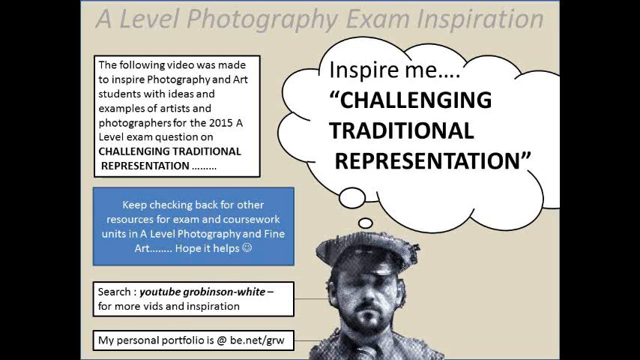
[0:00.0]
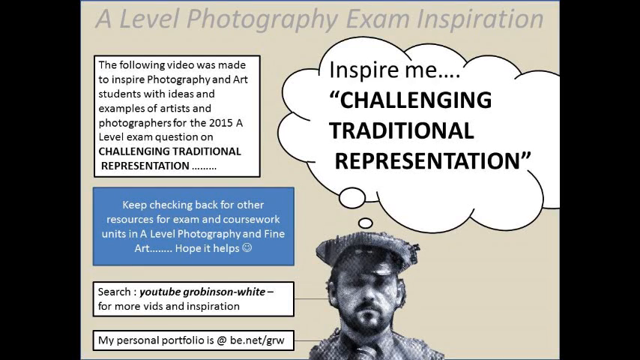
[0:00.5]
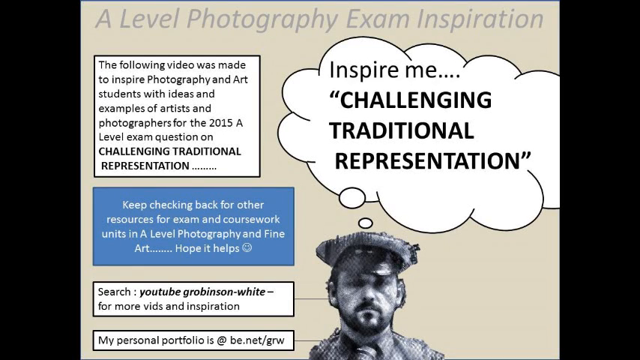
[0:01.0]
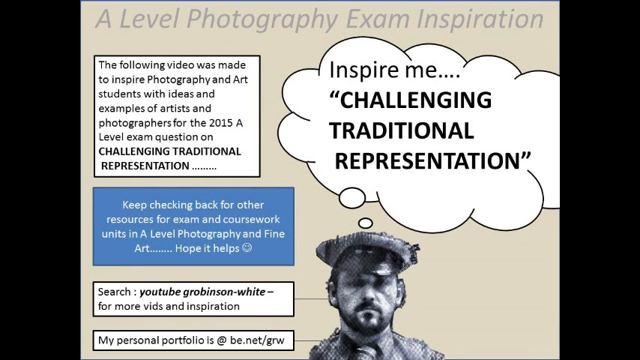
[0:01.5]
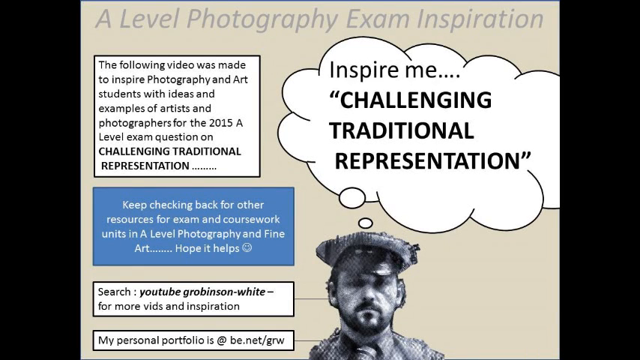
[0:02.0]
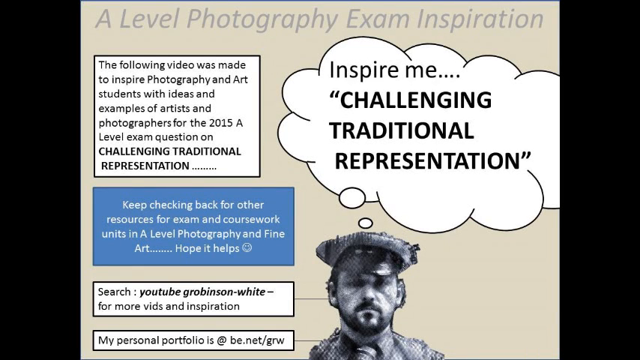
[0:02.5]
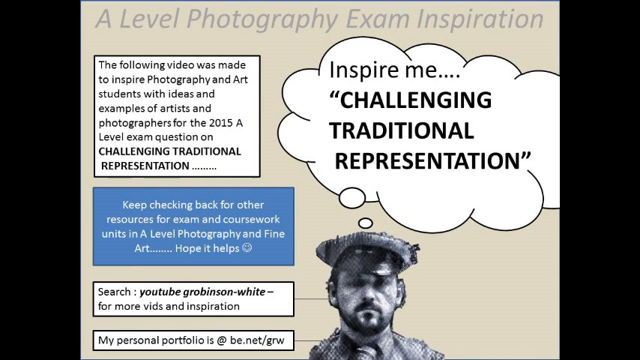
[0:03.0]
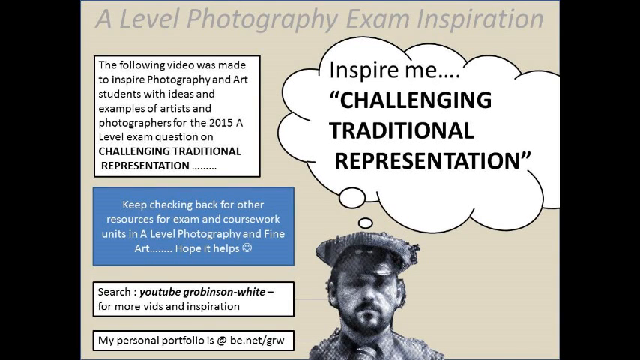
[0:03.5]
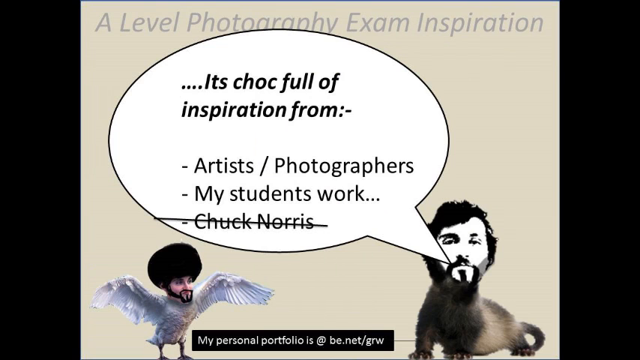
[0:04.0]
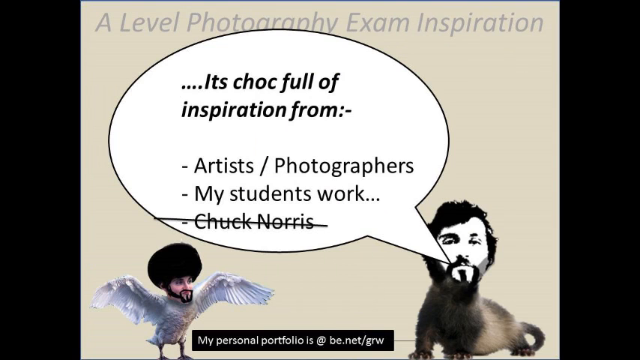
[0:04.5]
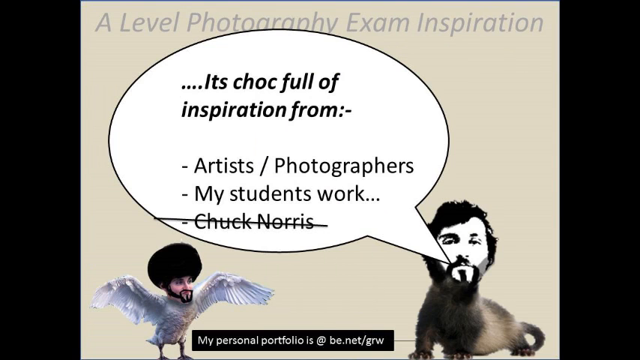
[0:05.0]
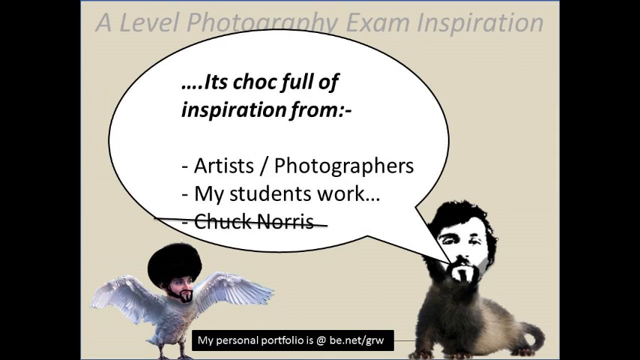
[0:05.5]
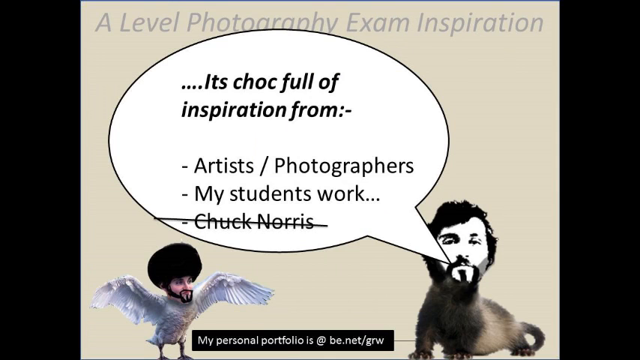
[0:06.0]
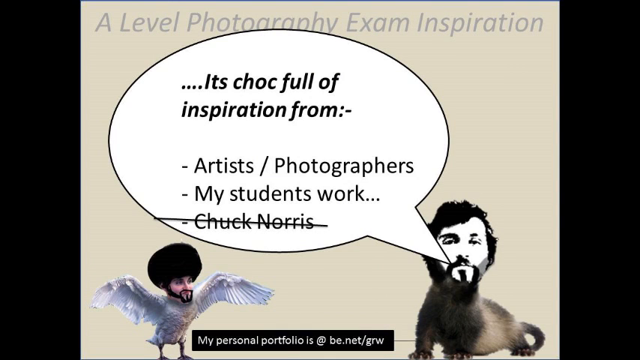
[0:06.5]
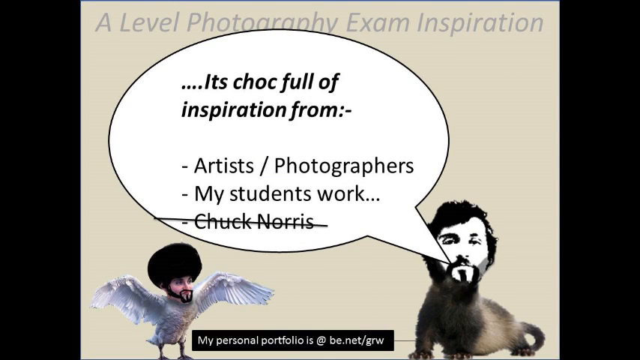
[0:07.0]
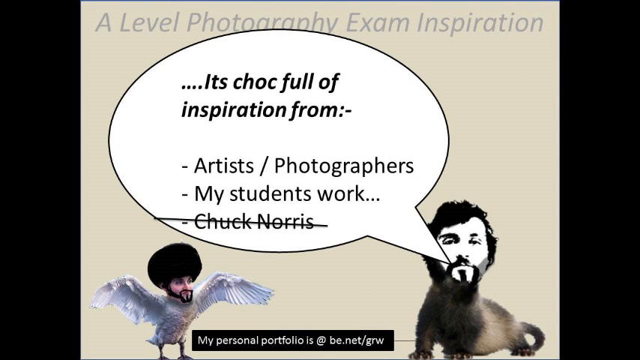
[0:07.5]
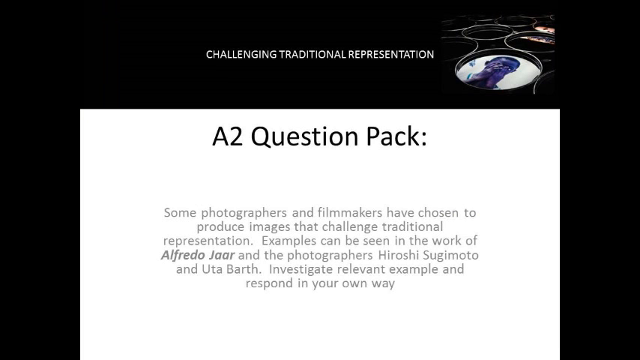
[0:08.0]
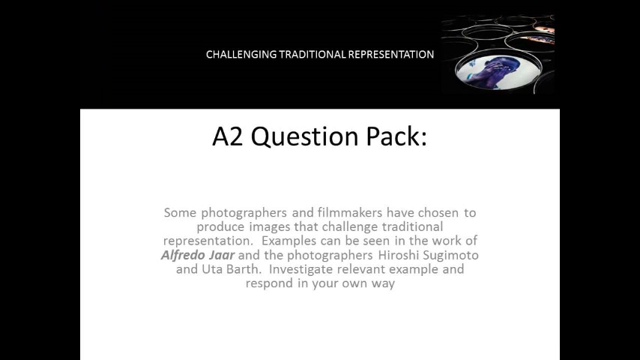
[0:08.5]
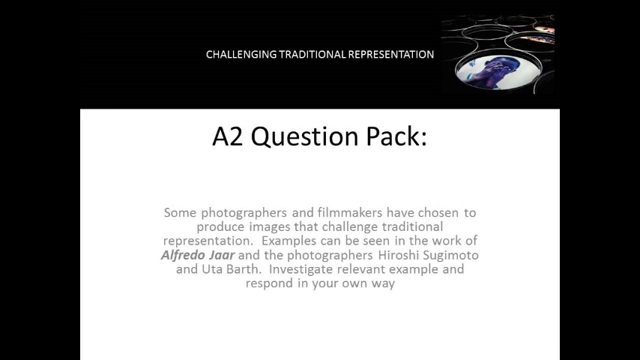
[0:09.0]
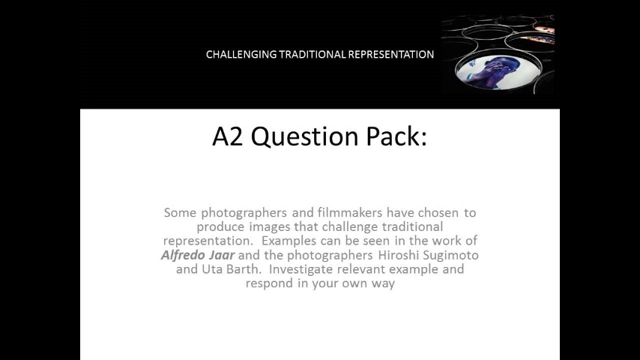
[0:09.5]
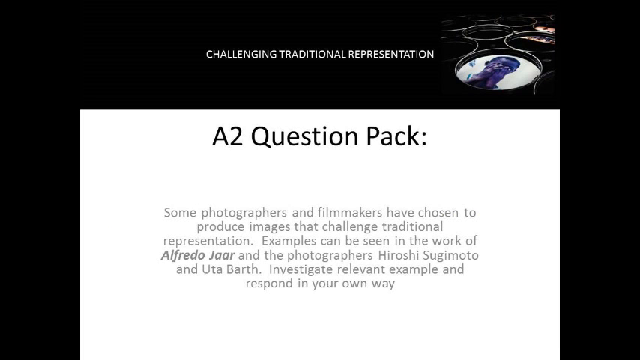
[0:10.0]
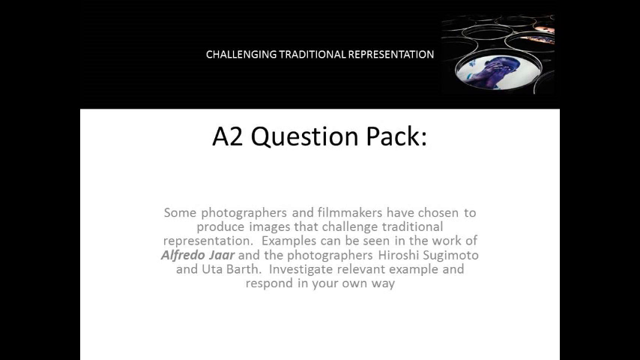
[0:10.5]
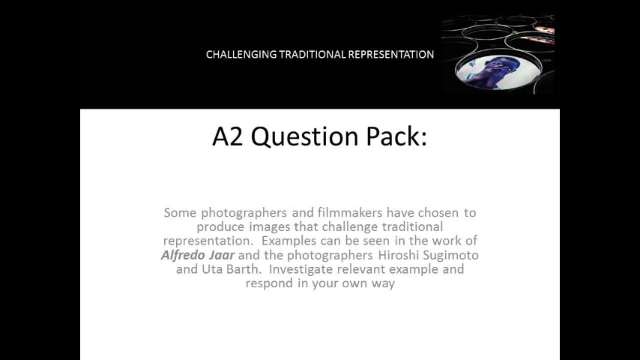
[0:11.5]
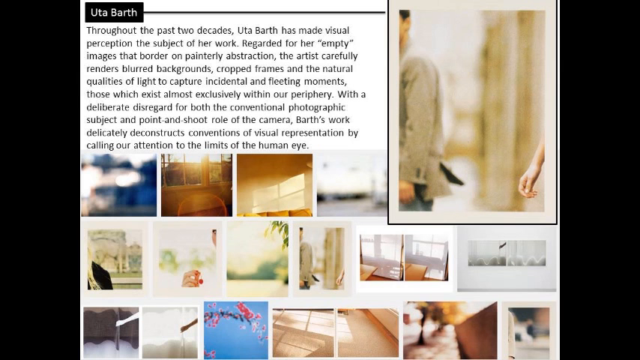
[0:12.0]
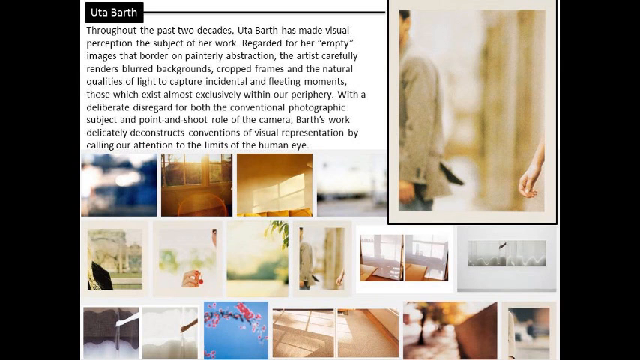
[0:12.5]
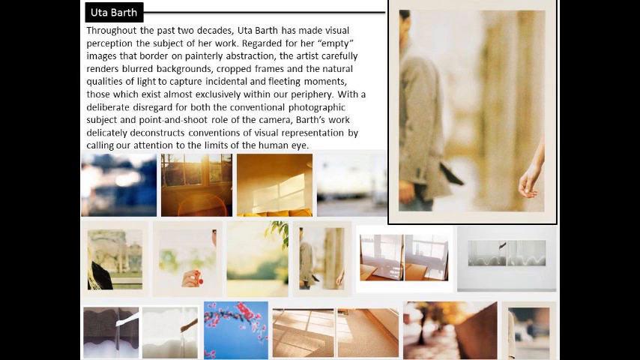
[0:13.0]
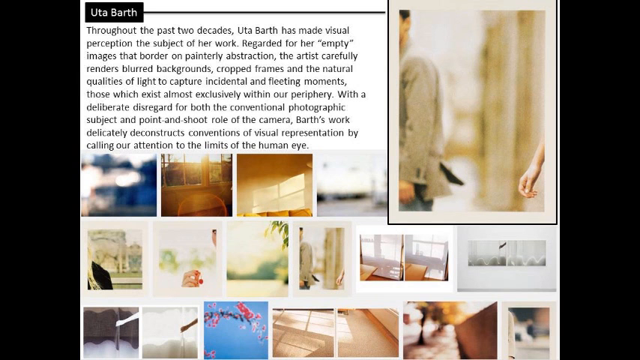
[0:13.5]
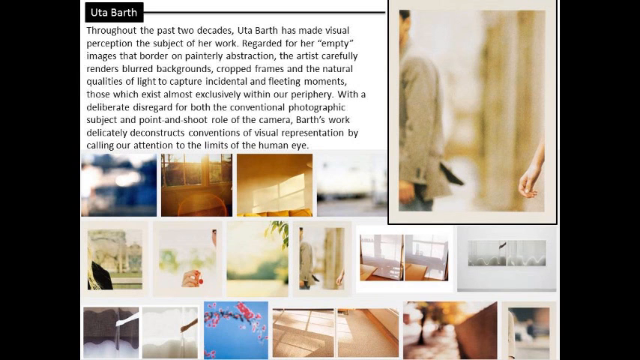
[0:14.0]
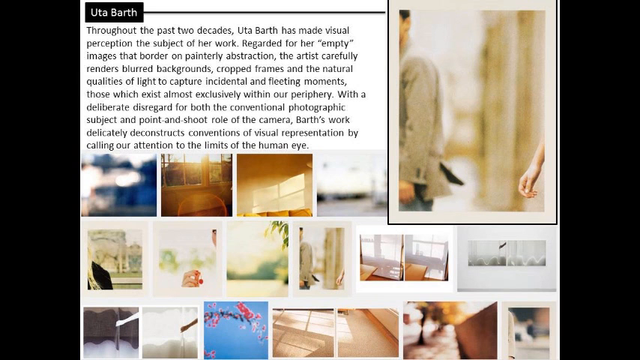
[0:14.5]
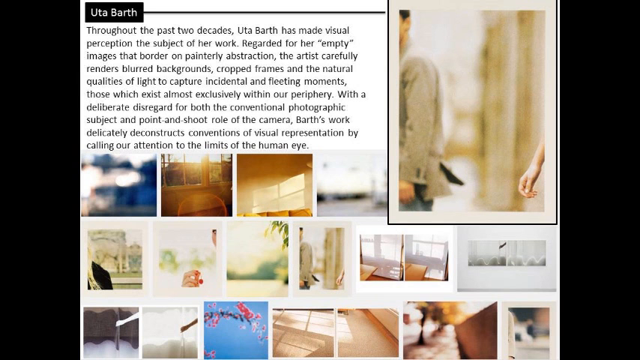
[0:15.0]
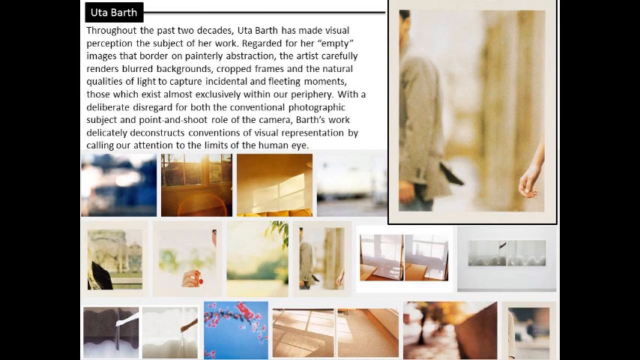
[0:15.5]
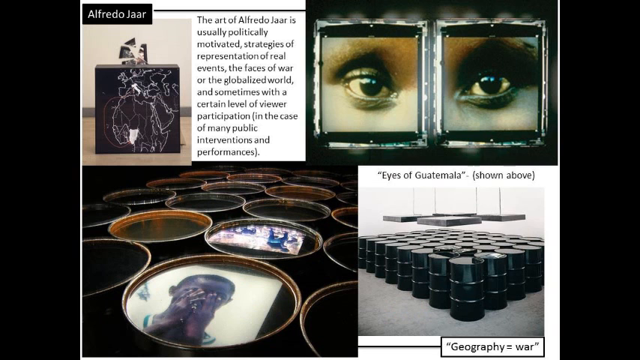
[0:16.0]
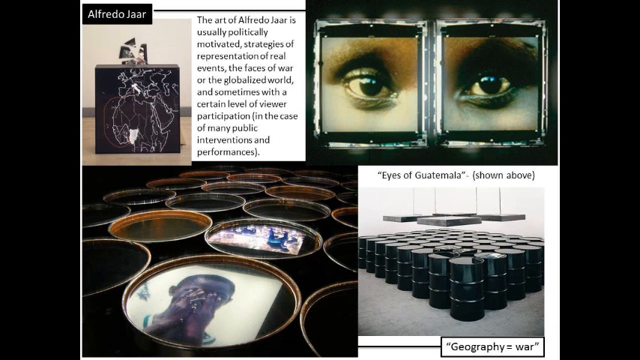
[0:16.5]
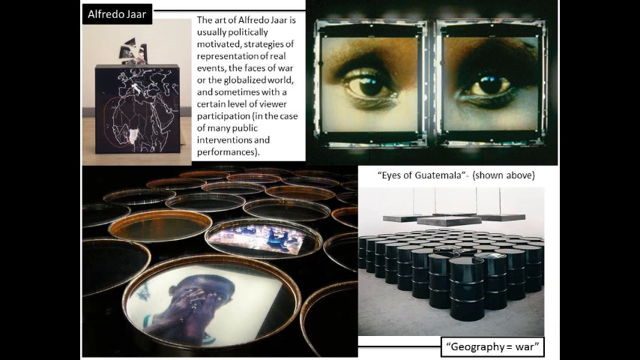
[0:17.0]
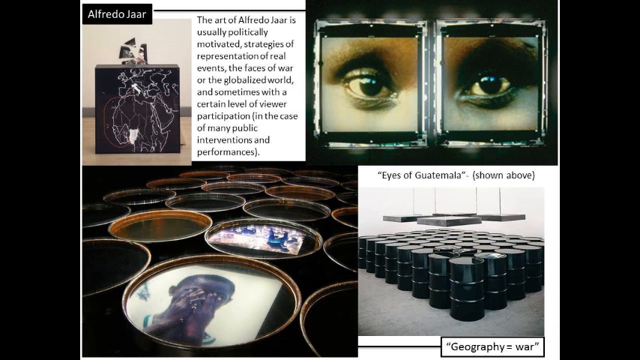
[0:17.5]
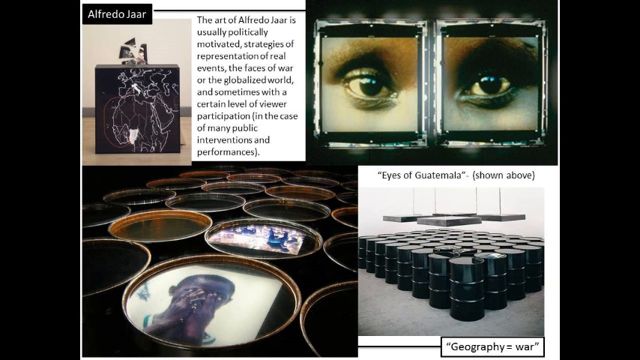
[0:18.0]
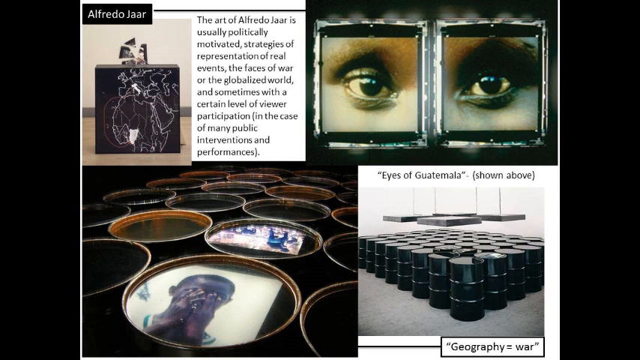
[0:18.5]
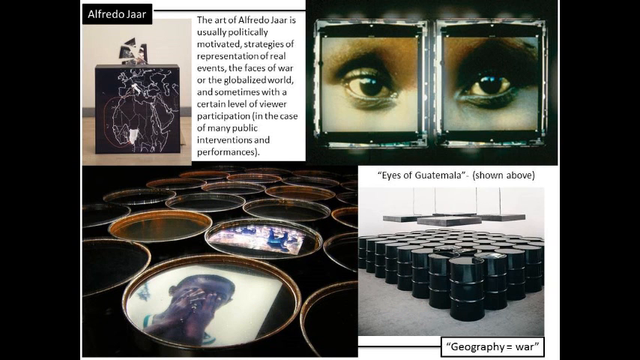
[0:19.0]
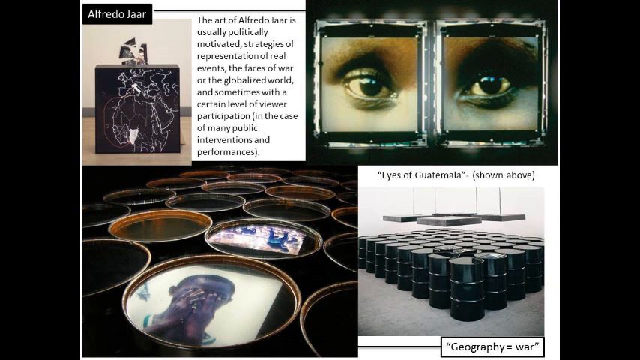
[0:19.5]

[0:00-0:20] A presentation is made up of small boxes containing paragraphs, along with a picture of a human being and a thought bubble showing what the person thinks. The presentation has a brown background, and grey text at the top reads "A Level Photography Exam Inspiration". One of the boxes is white with black text that begins "The following video was made for" and refers to artists and photographers for the "2015 A Level Exam Question 1 Challenging Traditional Representation". Below it is a blue box reading "Keep checking back for other resources for exam and coursework you need in A-Level Photography and Fine Art... Hope it helps." Below that is another white box with black text telling viewers to search YouTube "for more vids and inspiration". The last box gives a personal portfolio address. The thought bubble says "inspire me, challenging traditional representation". The second screen shows the same background with a watermark. Two people are shown; one is attached to the body of a duck and the other to the body of a seagull. A speech bubble says "it's chock full of inspiration from artists or photographers, my students work". The next screen is black with a huge white box bearing the text "challenging traditional representation".